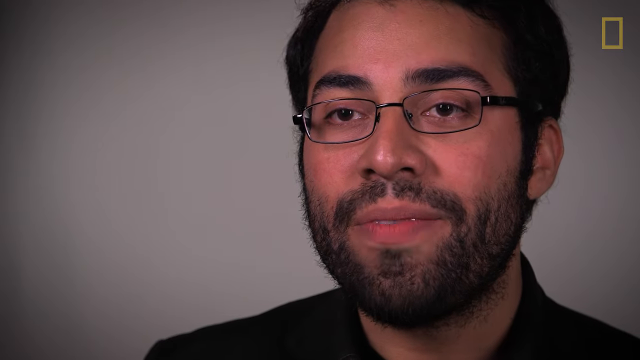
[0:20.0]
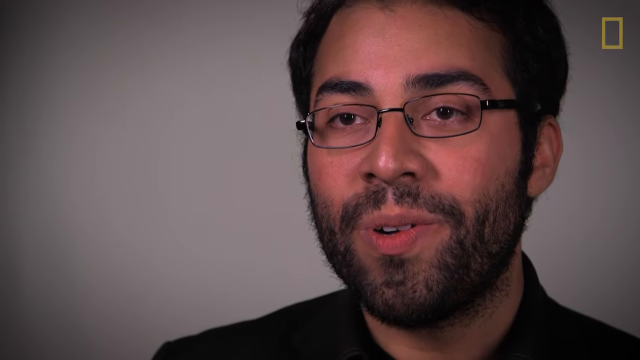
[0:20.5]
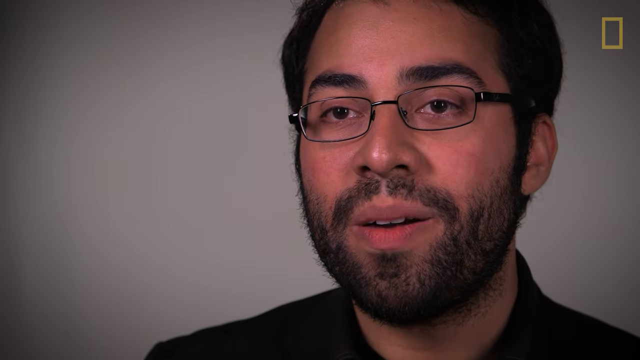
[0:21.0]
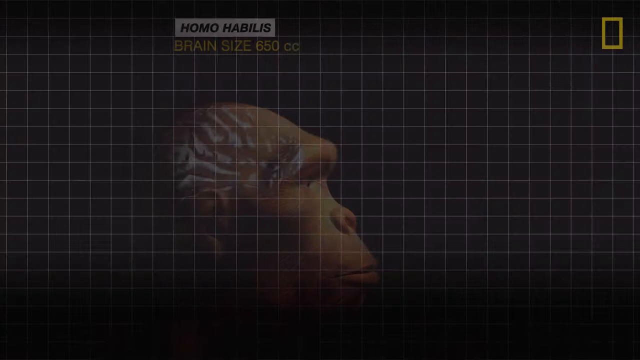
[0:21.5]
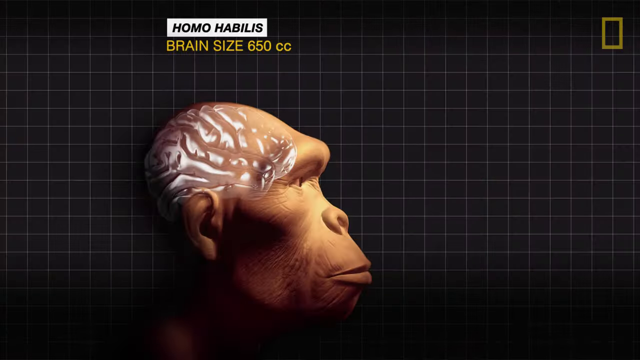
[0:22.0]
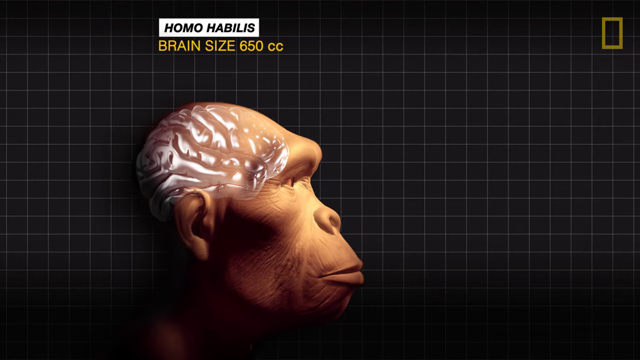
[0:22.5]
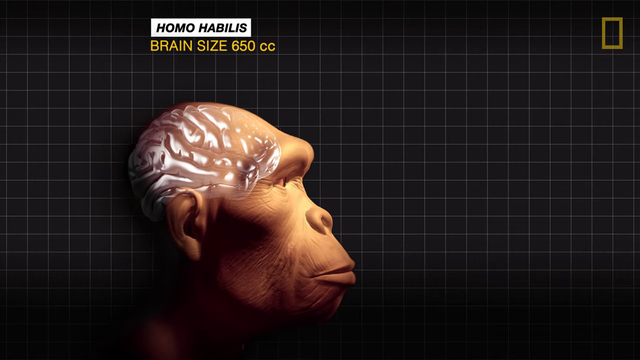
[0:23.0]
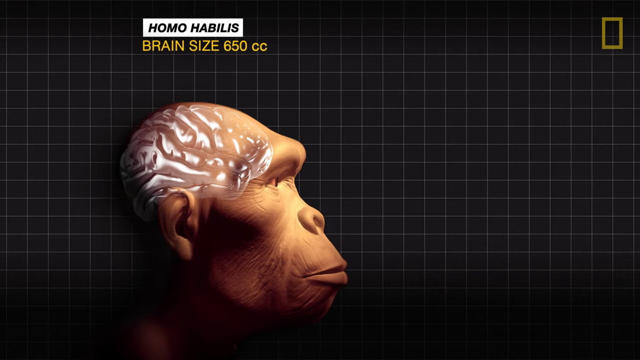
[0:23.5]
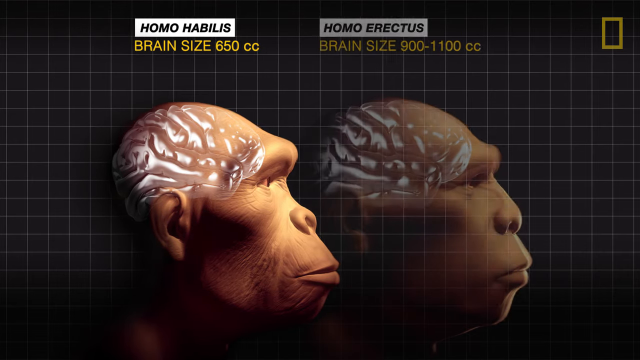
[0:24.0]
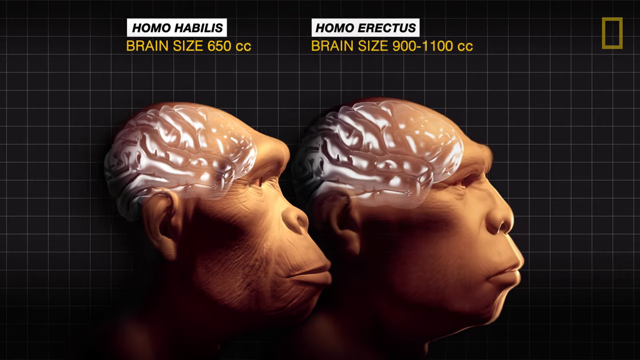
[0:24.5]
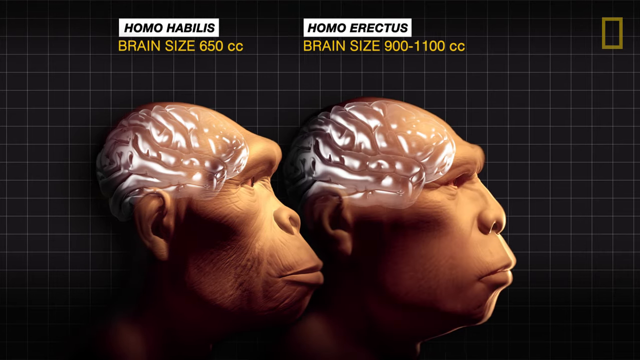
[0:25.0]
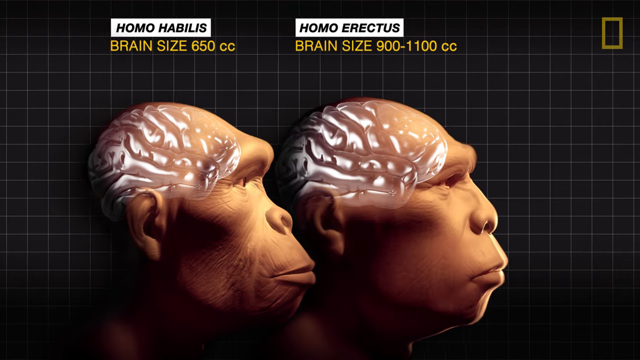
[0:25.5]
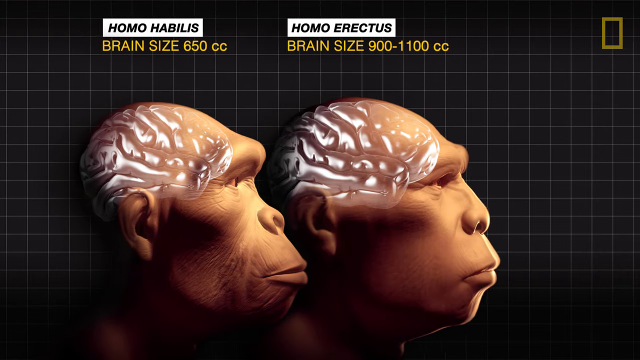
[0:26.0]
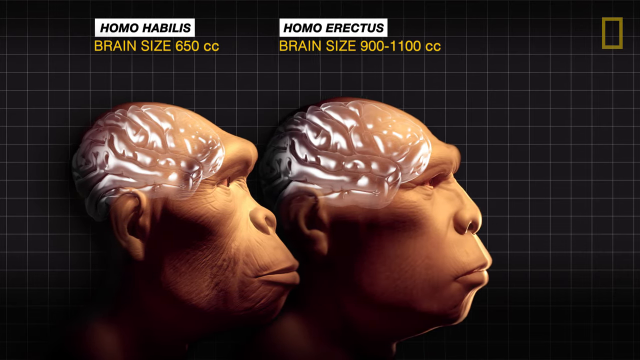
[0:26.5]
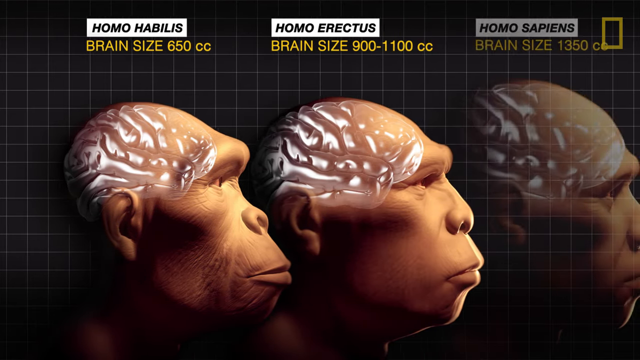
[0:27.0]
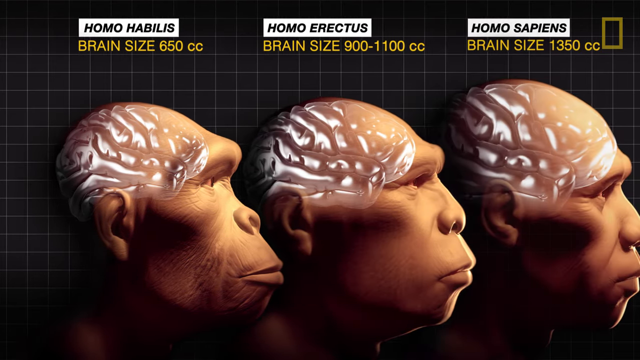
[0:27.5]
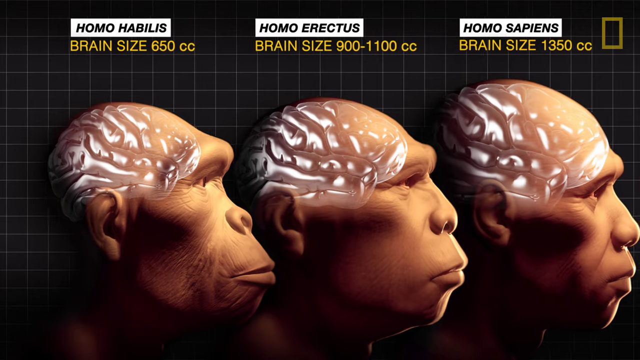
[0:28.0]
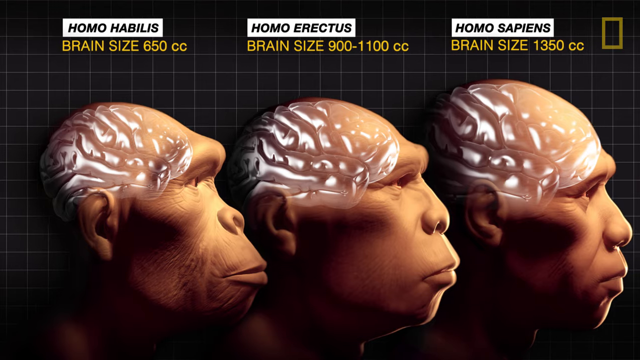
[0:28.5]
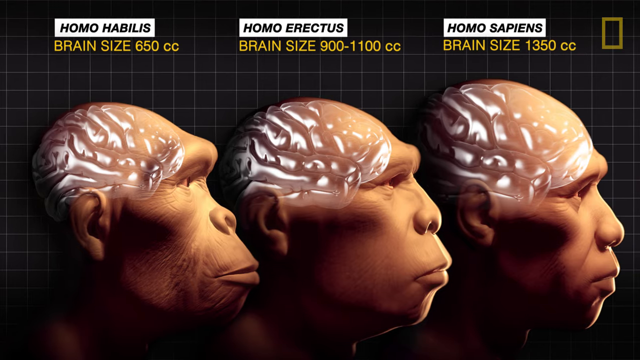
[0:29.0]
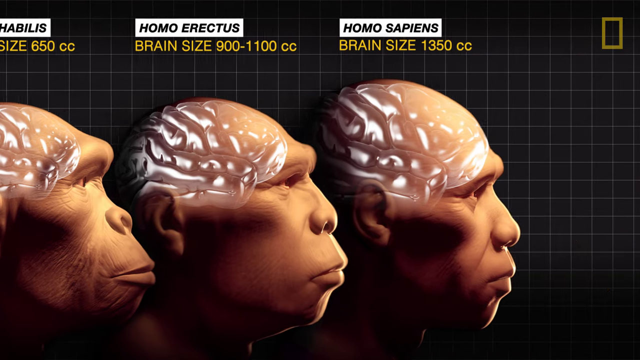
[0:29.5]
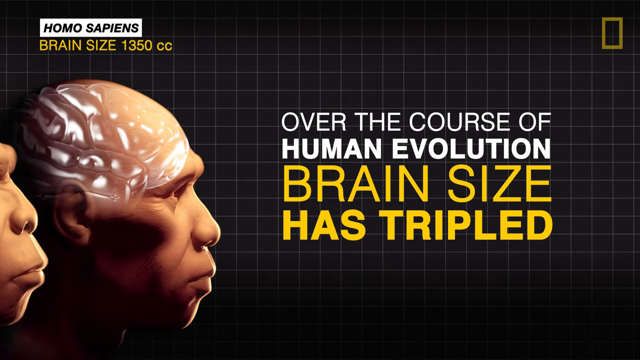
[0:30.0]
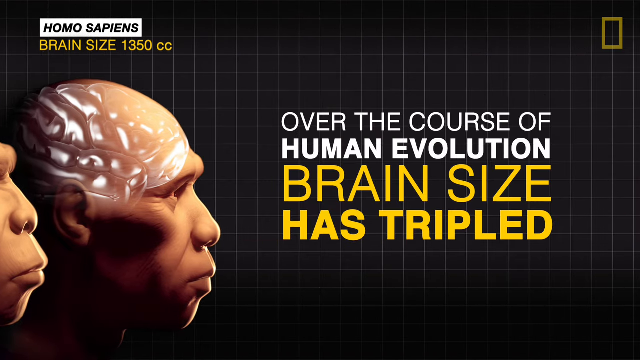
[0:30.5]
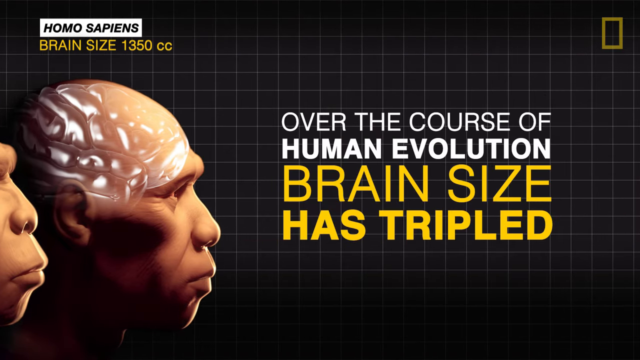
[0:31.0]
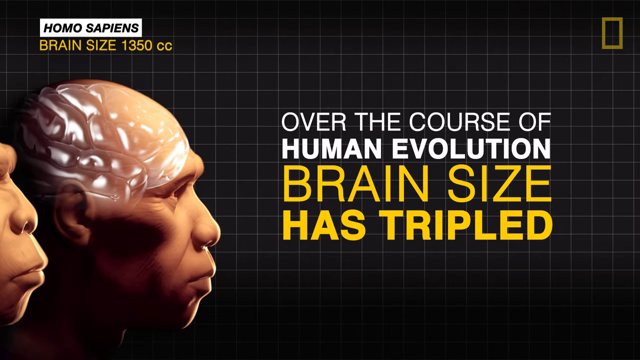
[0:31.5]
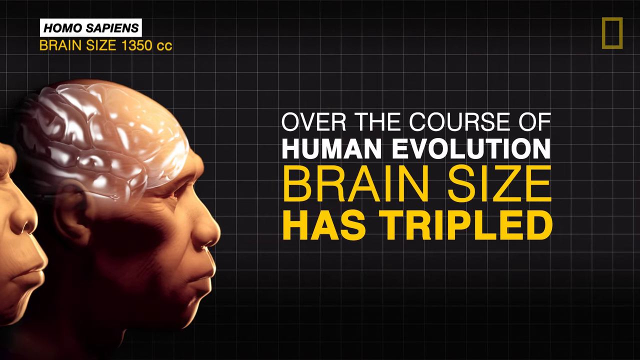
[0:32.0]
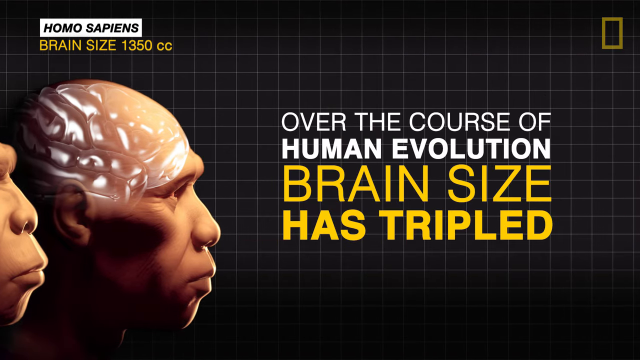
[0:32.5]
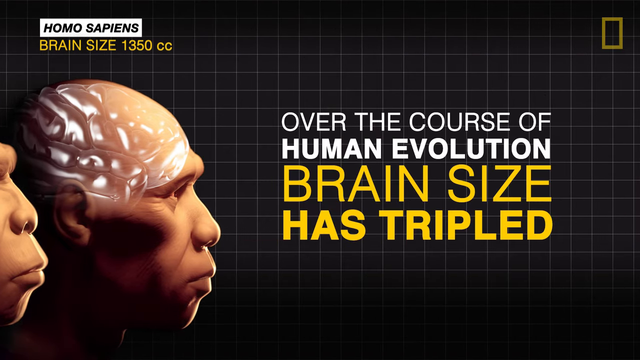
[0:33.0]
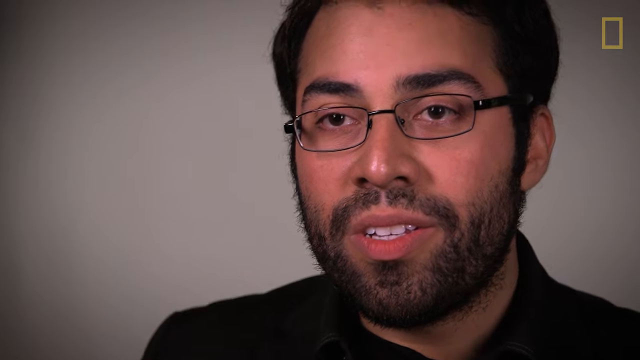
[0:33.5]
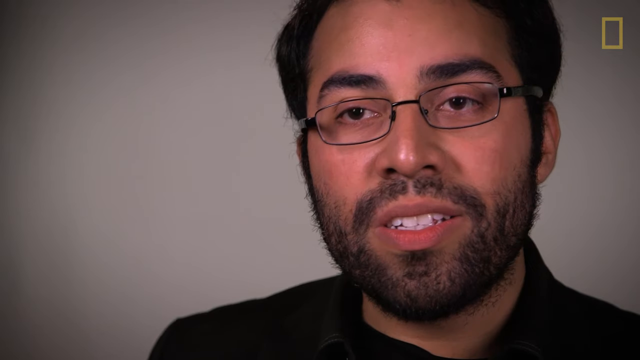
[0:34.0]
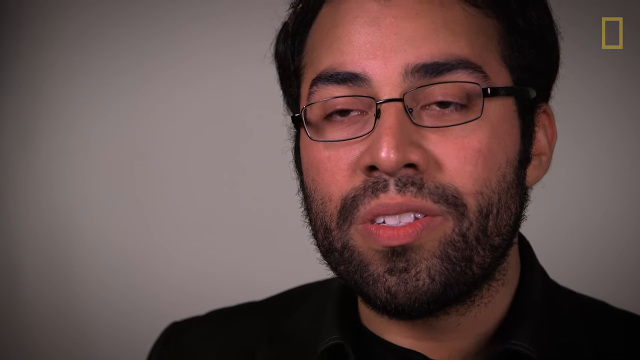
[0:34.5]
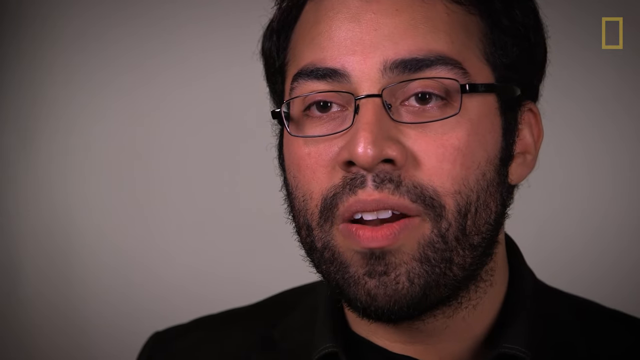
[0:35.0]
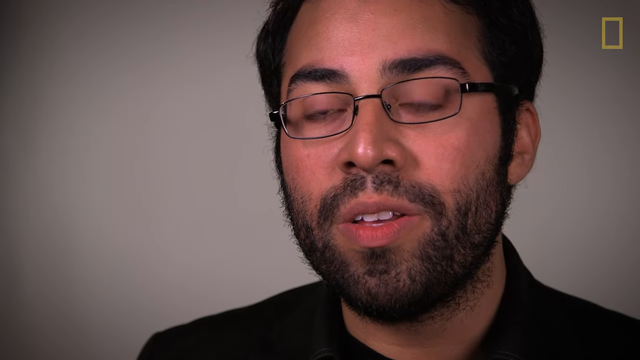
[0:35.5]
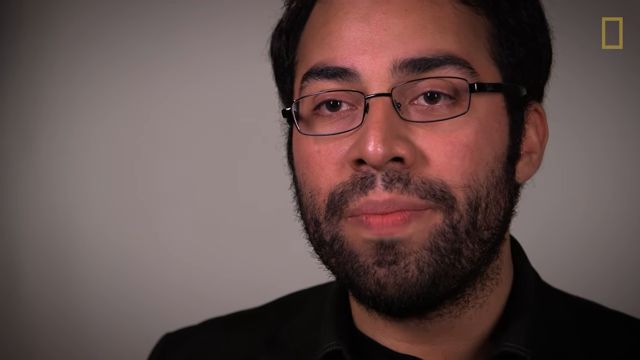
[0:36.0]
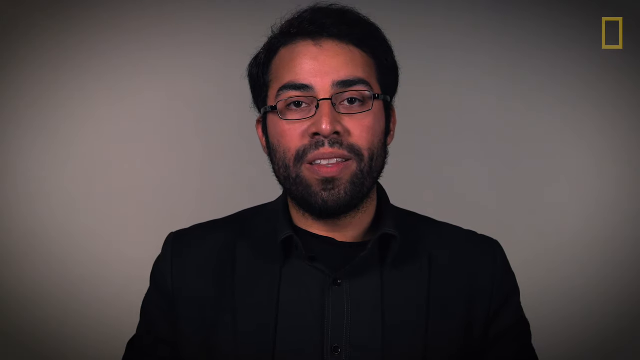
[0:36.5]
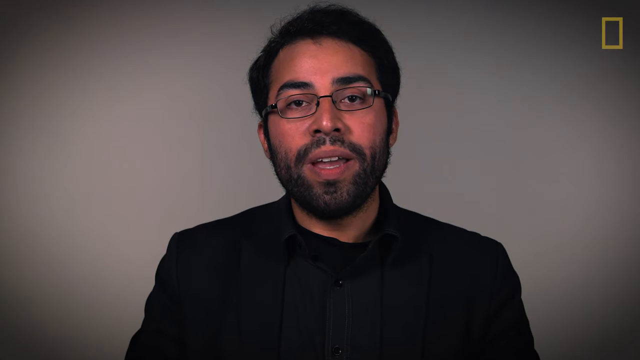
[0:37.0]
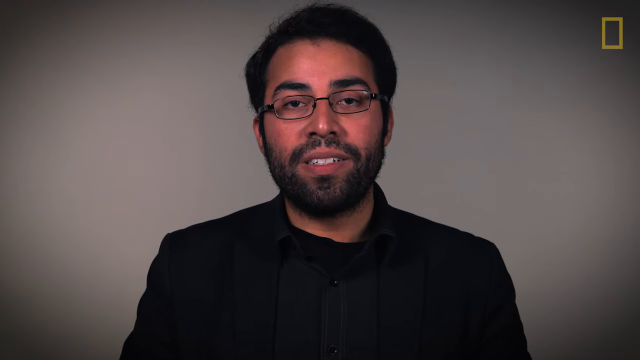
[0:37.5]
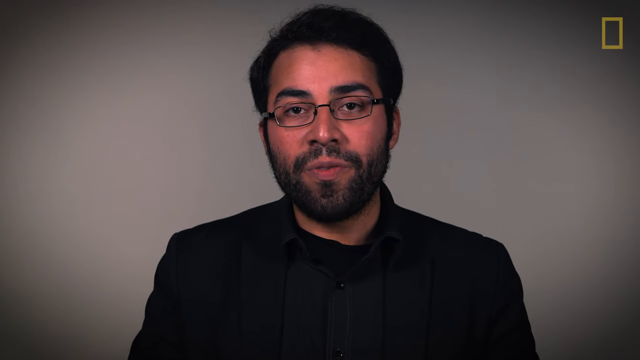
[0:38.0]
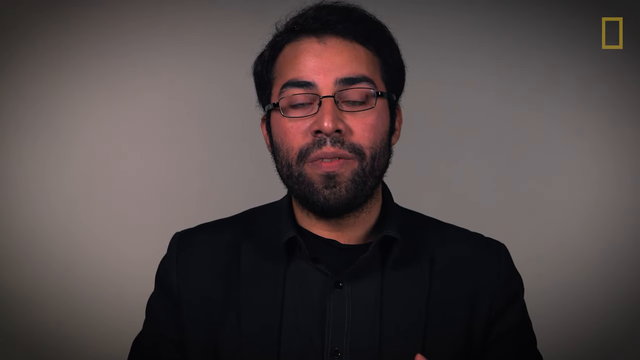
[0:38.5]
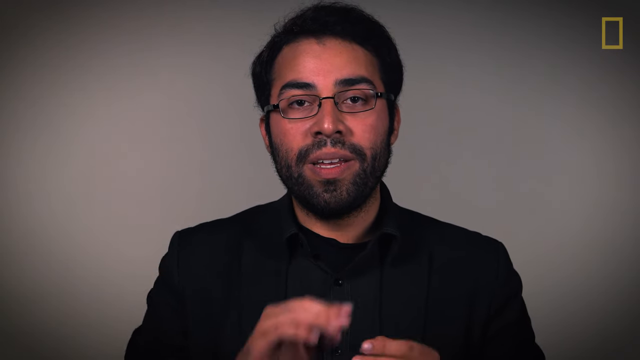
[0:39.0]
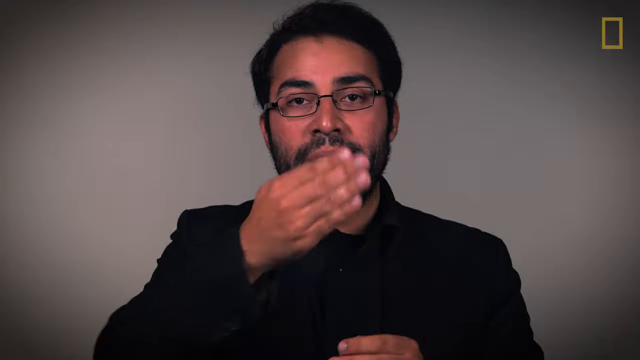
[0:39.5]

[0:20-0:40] The man is shown talking again, this time on the right side of the screen and a little more close up. The video then switches to the black grid background without him. A figure that looks kind of half ape, half man appears with his head to the right, kind of illuminated in front, with a kind of white brain outline where his brain would be. Another figure that looks a little more human appears next to him, then a third that looks even more human. They all kind of move to the left. White text boxes above their heads read "Homo habilis," "Homo erectus" and "Homo sapiens," and yellow text beneath them reads "brain size 650 cc," a second label beginning "brain size 900," and "brain size 1350 cc." As they move left, only the third figure remains. Text then appears on the right over four lines: white all caps reading "over the course of human evolution" and, in yellow, "brain size has tripled." "Human evolution" is bolder than the text above it, and "brain size" is the largest text of all. The video switches back to the man talking on the right side, and then he is shown a little further away and in the center.